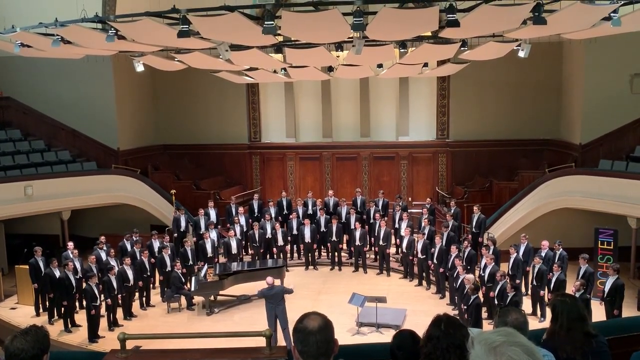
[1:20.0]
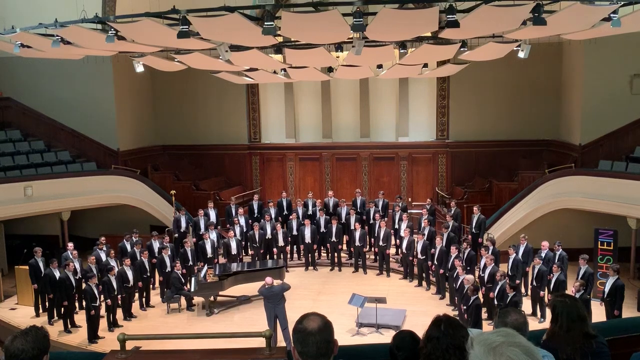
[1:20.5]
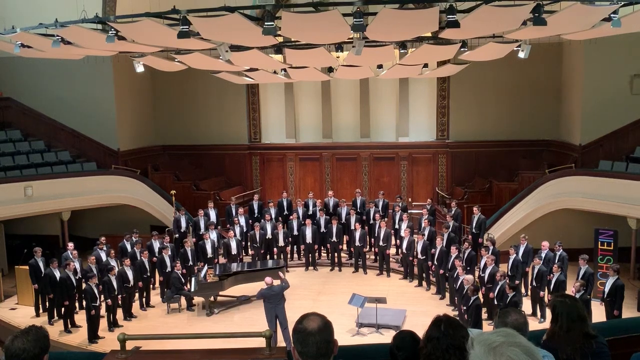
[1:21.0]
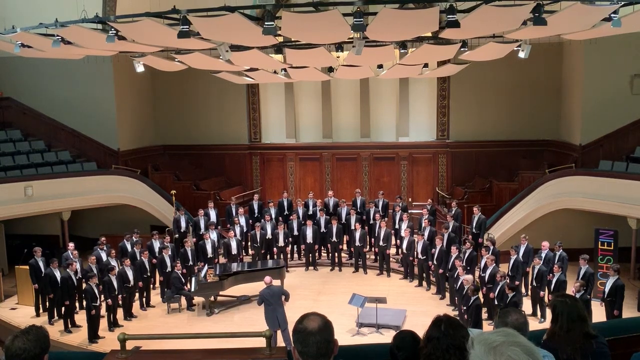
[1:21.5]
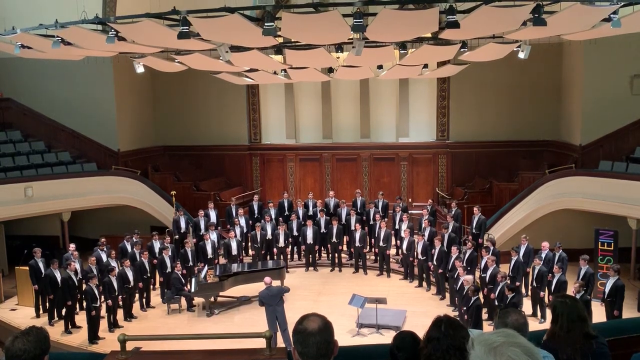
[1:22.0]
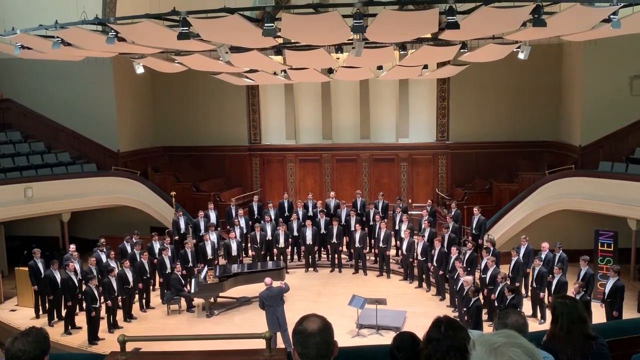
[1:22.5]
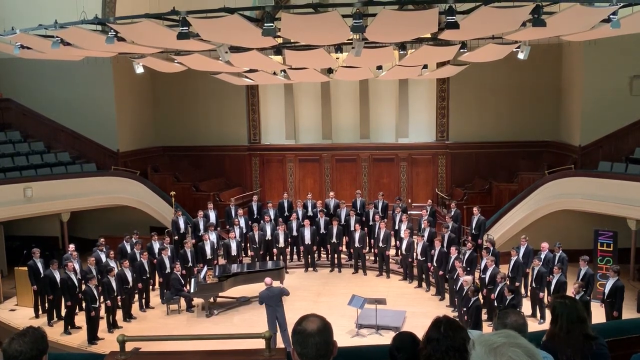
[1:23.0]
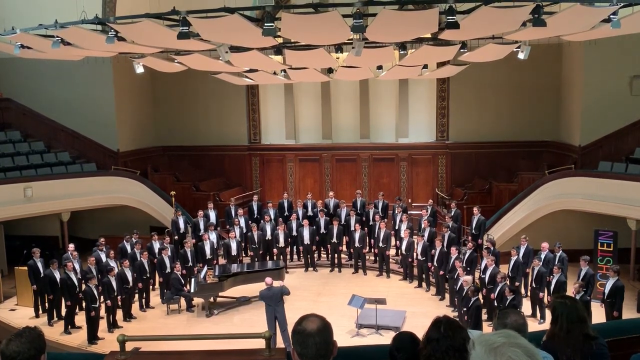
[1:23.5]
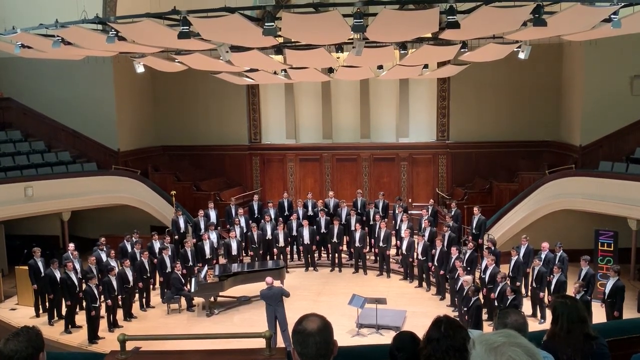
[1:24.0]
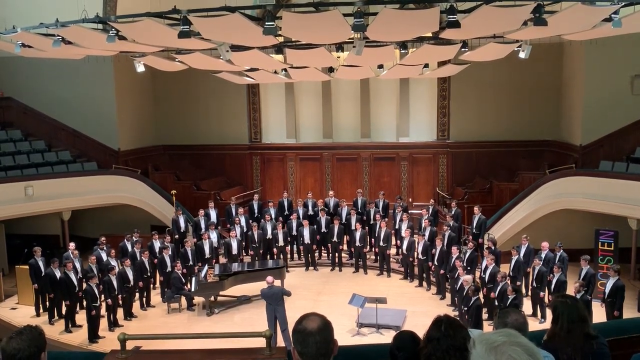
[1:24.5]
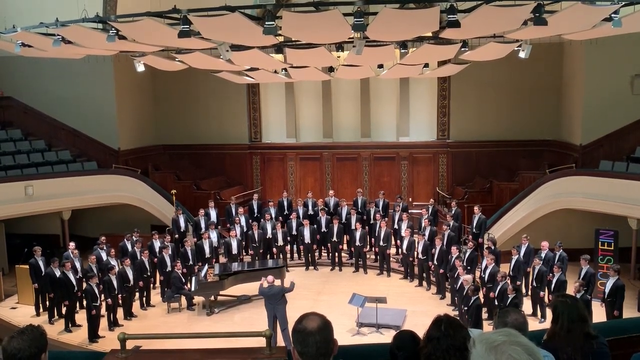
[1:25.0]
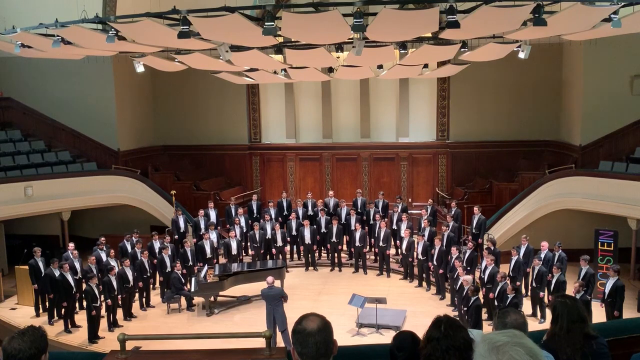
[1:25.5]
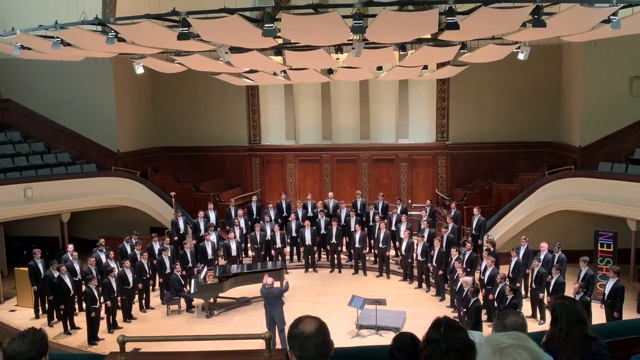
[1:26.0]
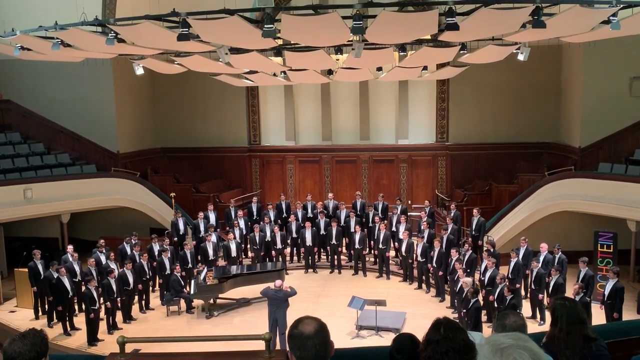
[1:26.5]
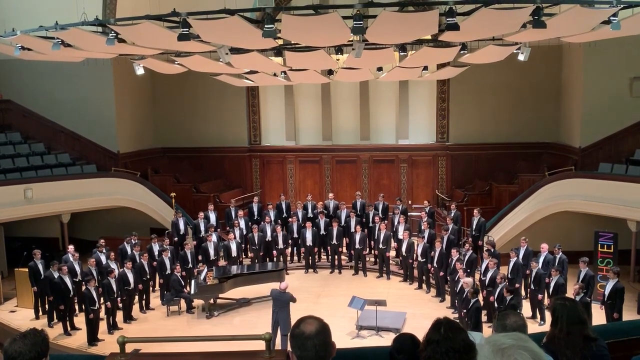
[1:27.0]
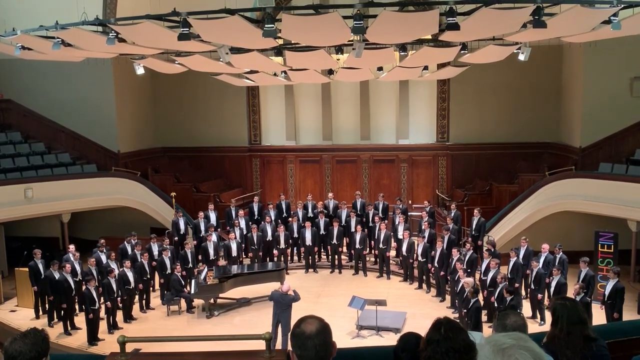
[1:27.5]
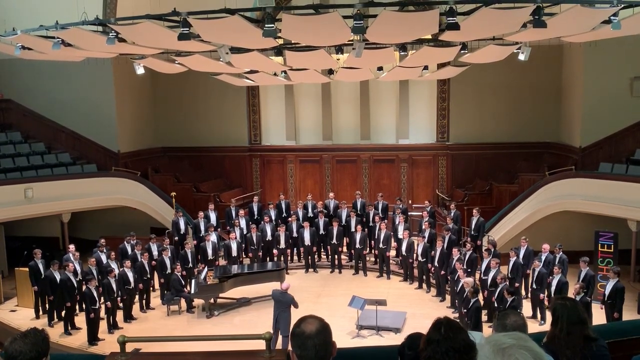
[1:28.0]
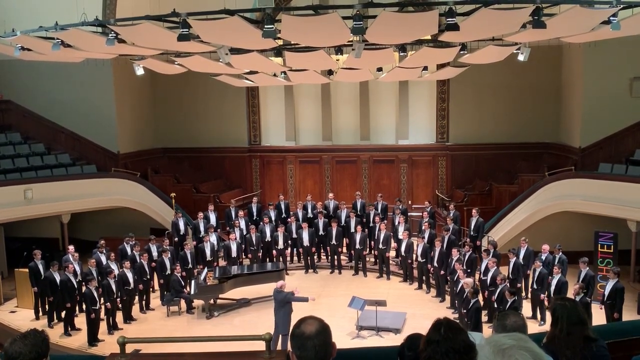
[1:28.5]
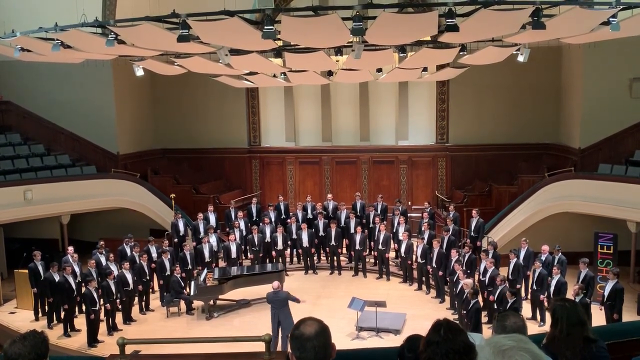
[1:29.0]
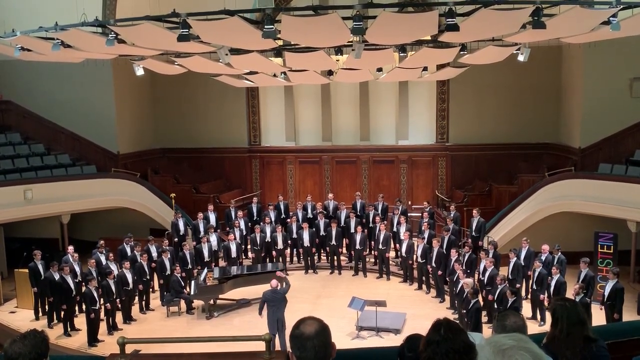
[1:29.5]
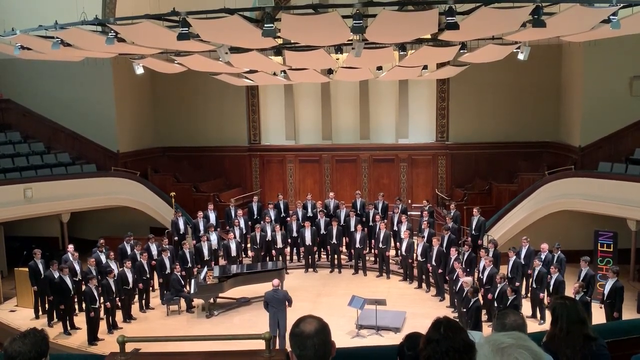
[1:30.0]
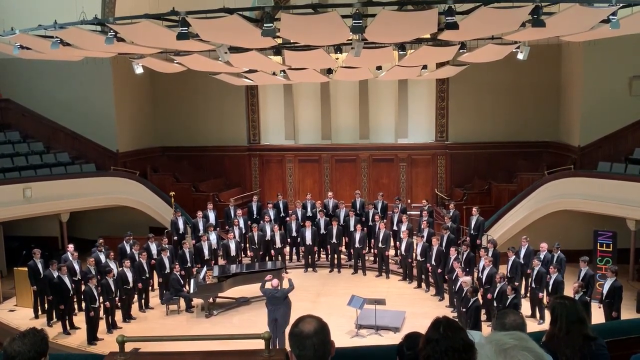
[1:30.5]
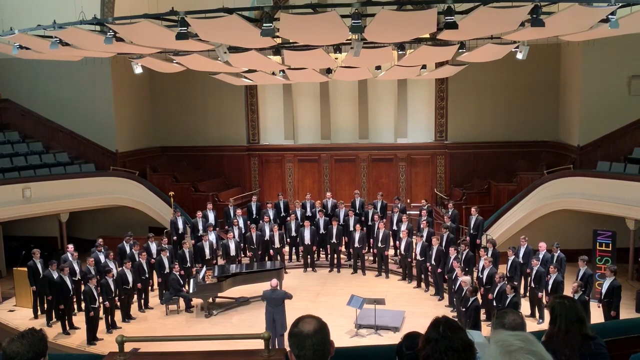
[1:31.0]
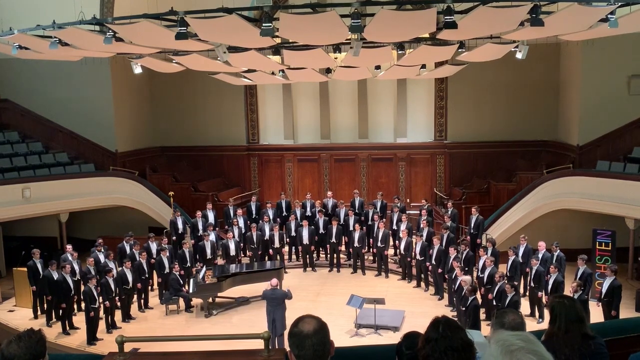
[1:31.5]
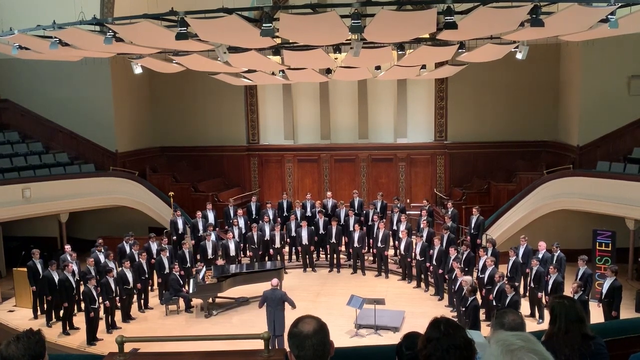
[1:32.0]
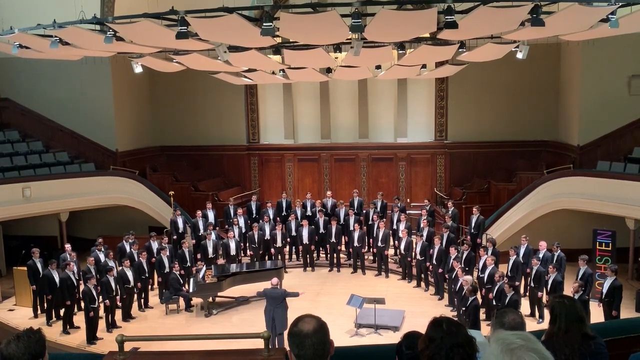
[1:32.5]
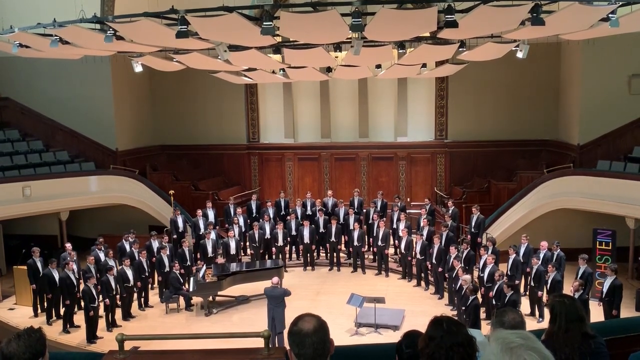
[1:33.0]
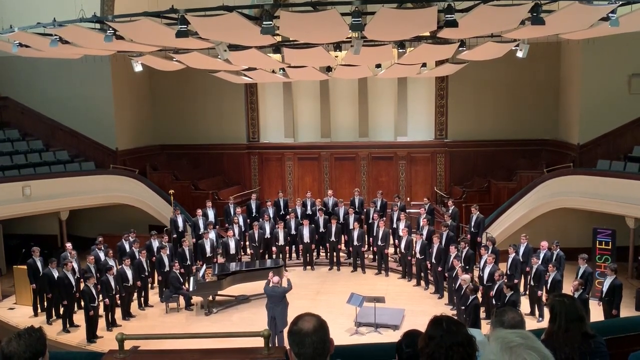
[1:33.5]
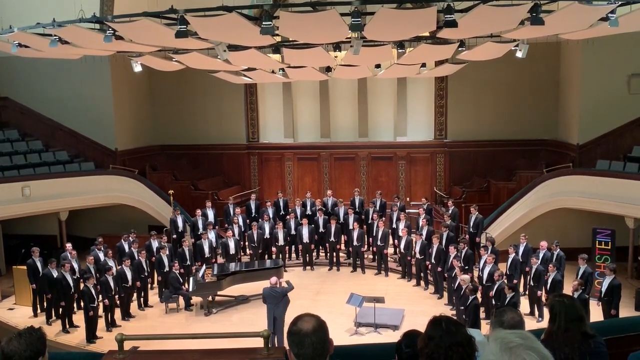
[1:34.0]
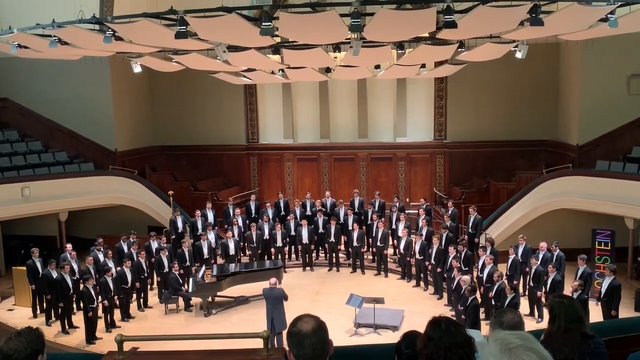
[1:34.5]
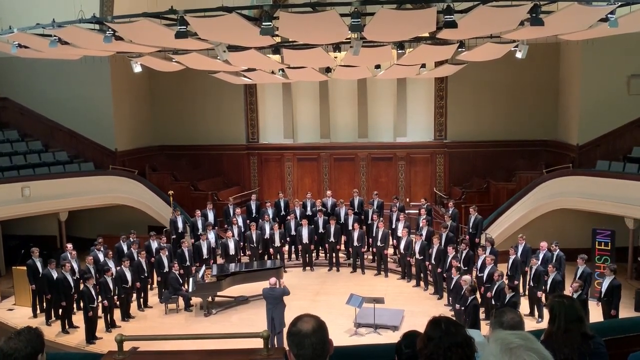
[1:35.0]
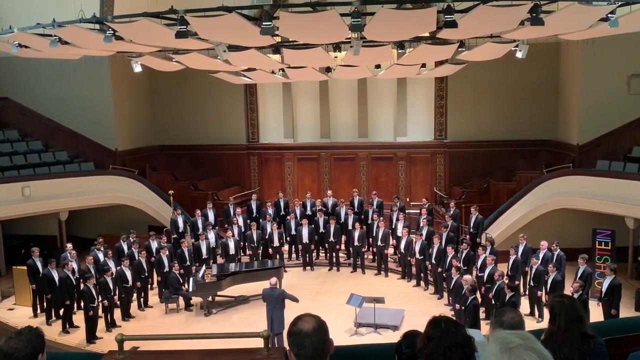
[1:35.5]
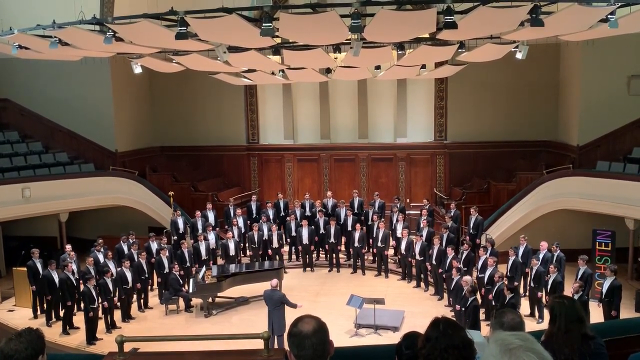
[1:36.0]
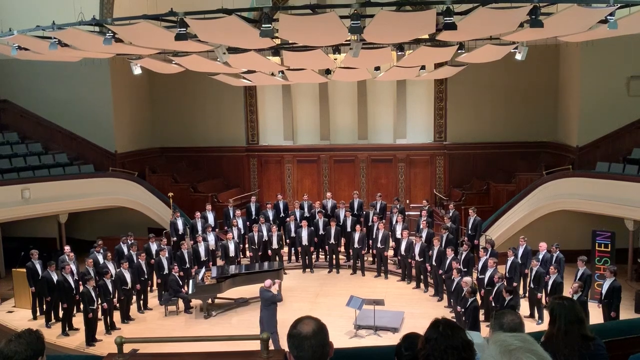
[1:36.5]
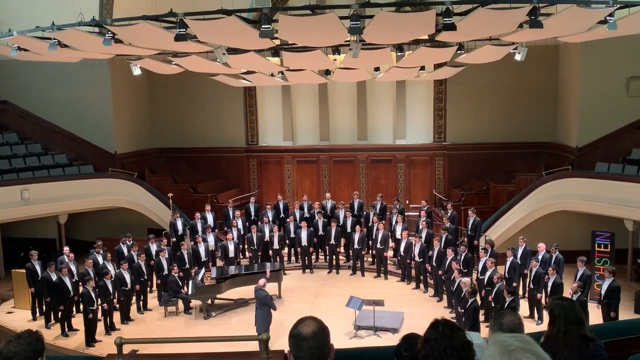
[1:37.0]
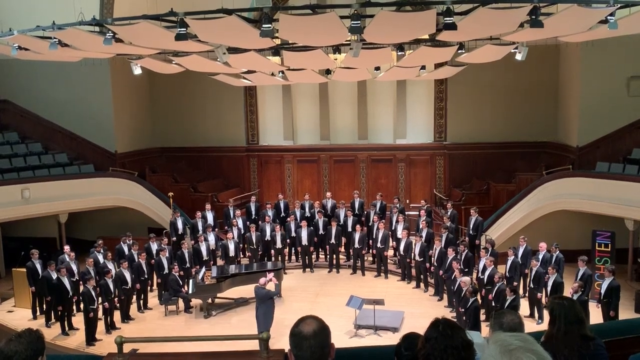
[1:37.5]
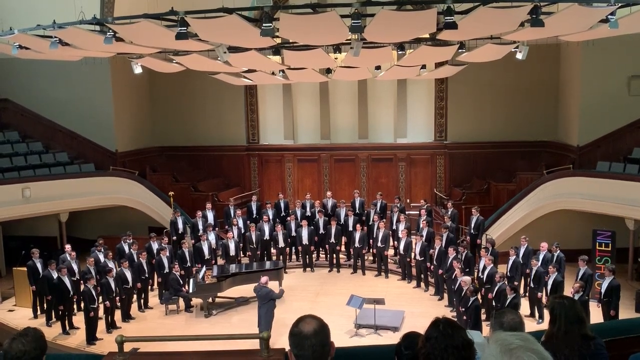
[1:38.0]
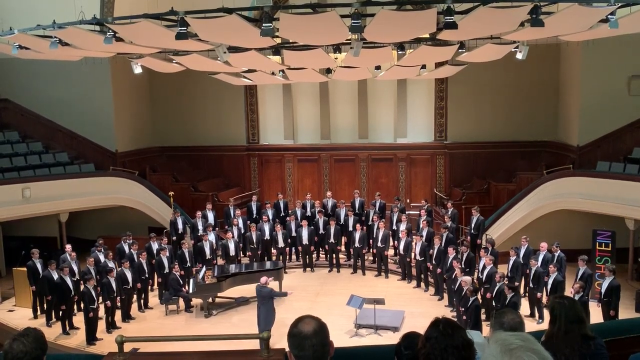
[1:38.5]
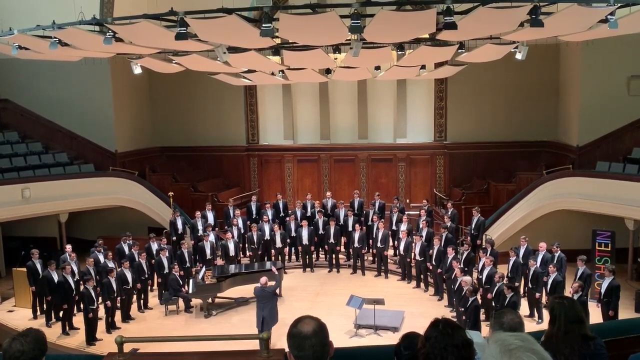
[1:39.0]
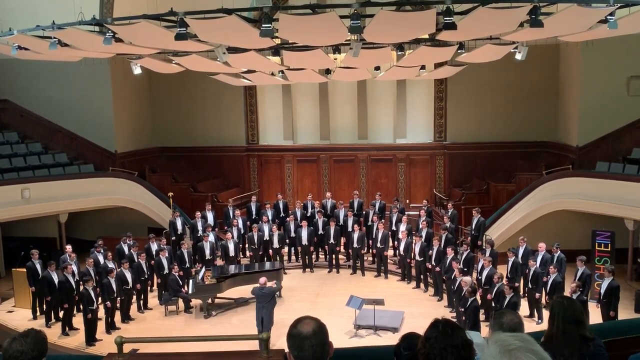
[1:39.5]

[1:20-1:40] The conductor is center stage, conducting the men in front of him, facing slightly to the left and leaning to the left with his body. The piano player is not playing the piano; his hands appear to be on his lap. The singers all stand attentively, waiting to be cued by the conductor. Still leaning toward the left, the conductor begins moving both arms to conduct the singers on the left. He then turns slightly toward the right of center and conducts those singers. He moves both arms in grand gestures up and down and to the sides, and continues to do this. At one point, while facing the center, he reaches out his left arm and waves some of the men in front of him in to begin singing while still conducting. All the while, the men remain focused and singing.